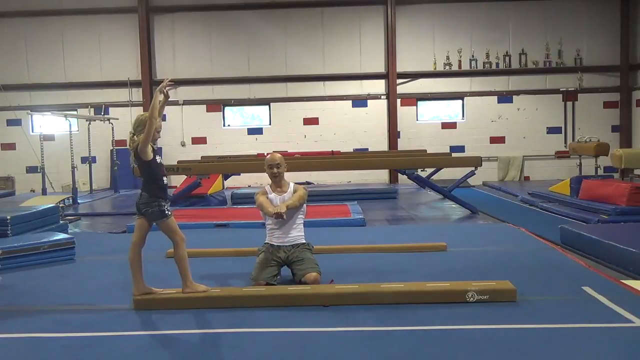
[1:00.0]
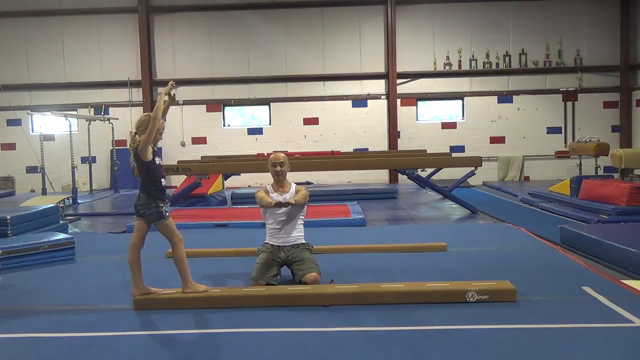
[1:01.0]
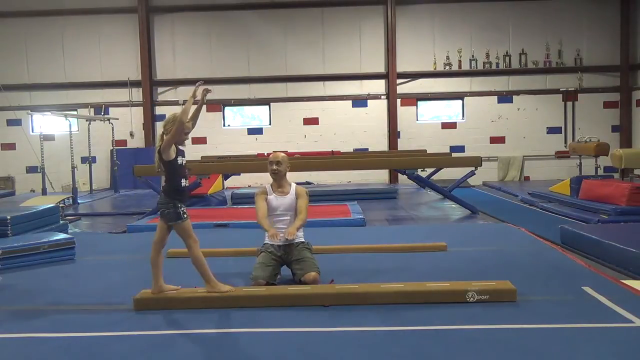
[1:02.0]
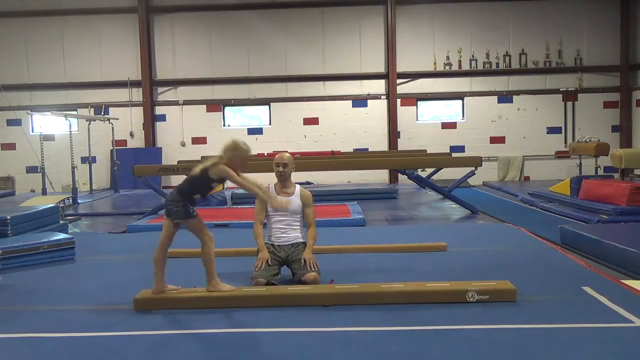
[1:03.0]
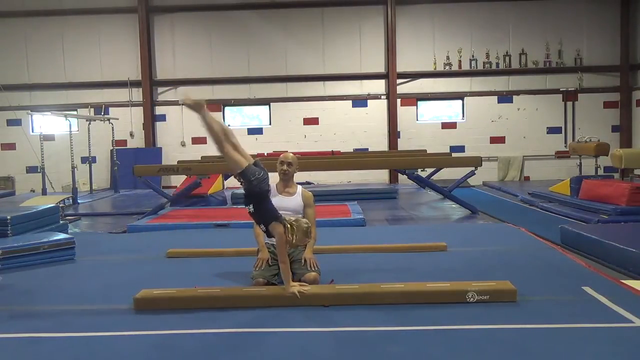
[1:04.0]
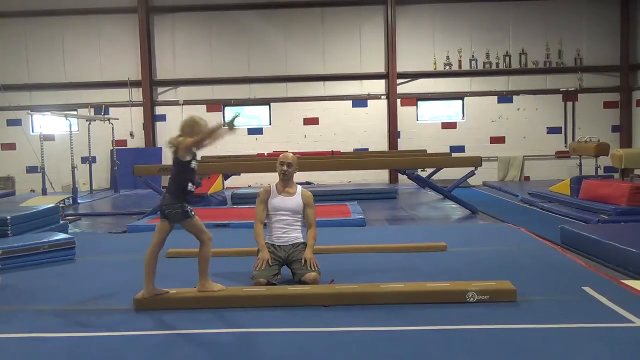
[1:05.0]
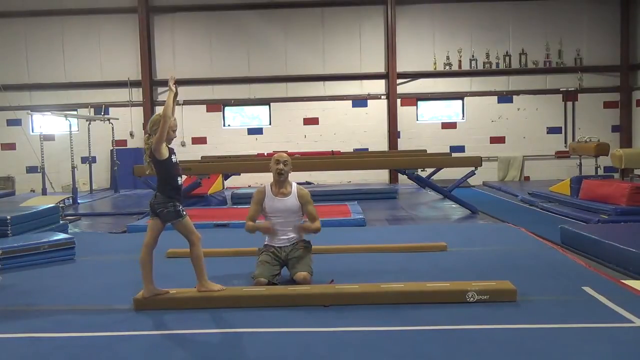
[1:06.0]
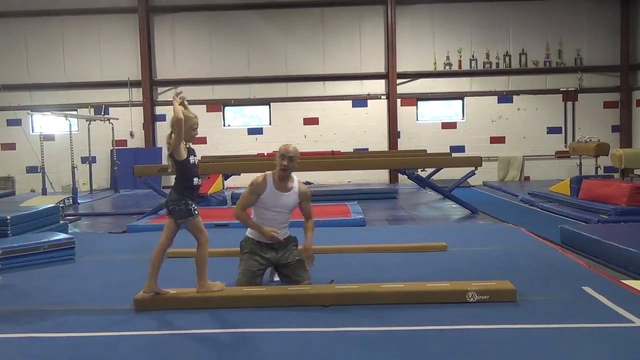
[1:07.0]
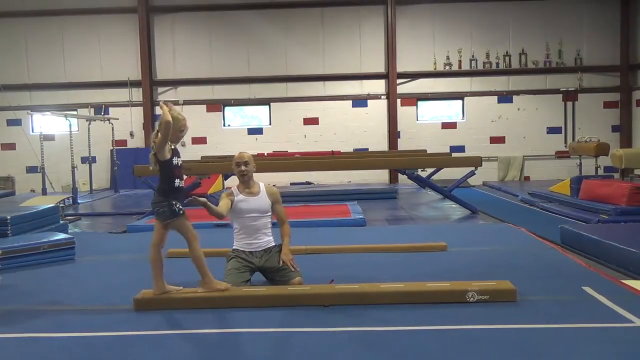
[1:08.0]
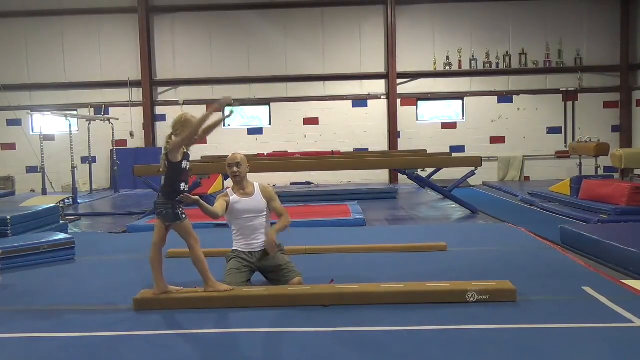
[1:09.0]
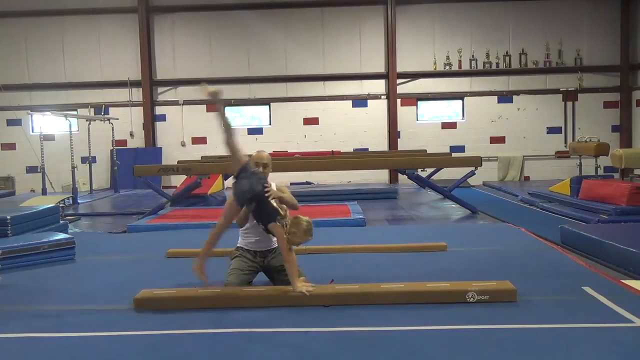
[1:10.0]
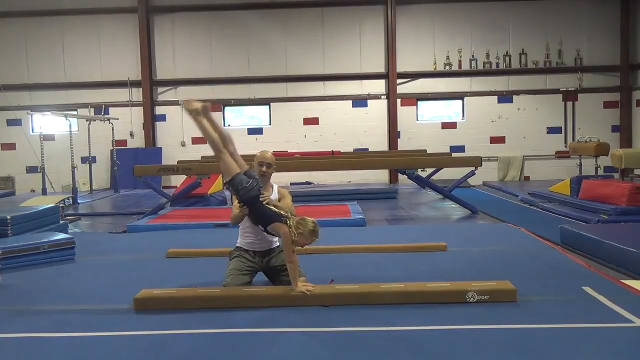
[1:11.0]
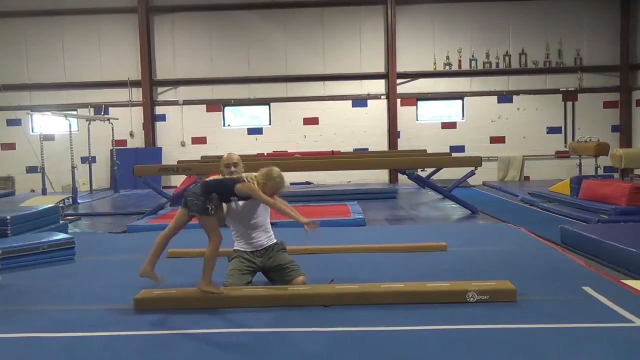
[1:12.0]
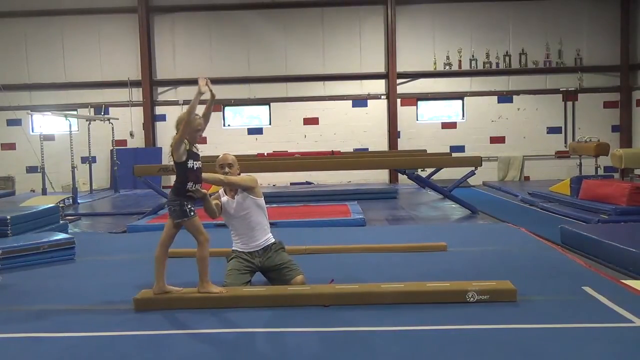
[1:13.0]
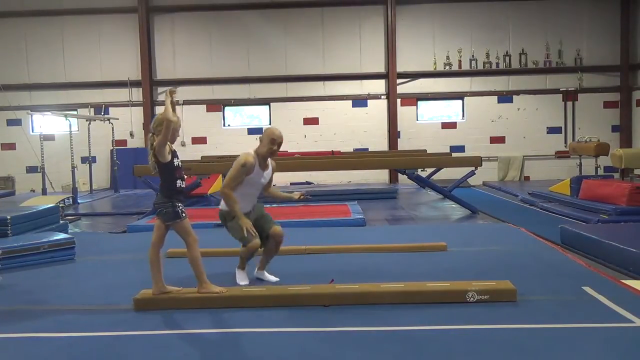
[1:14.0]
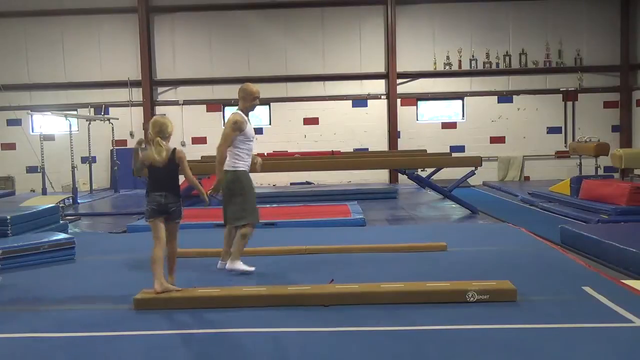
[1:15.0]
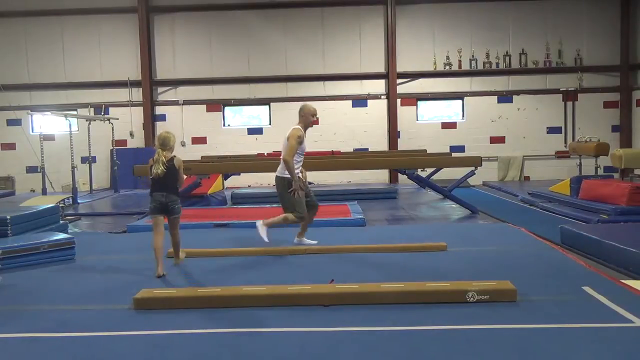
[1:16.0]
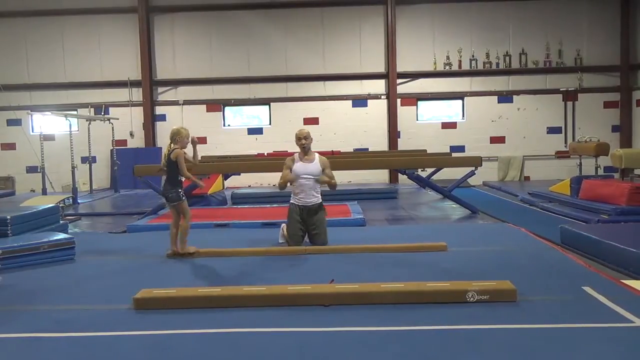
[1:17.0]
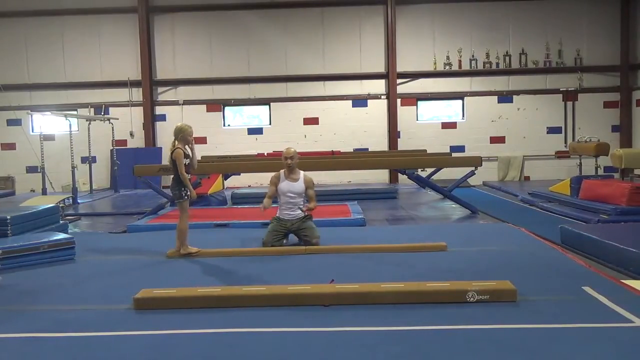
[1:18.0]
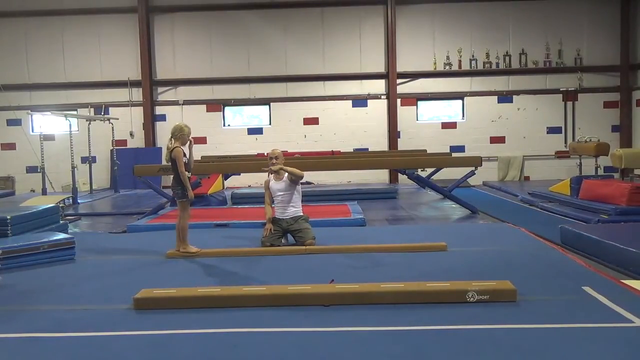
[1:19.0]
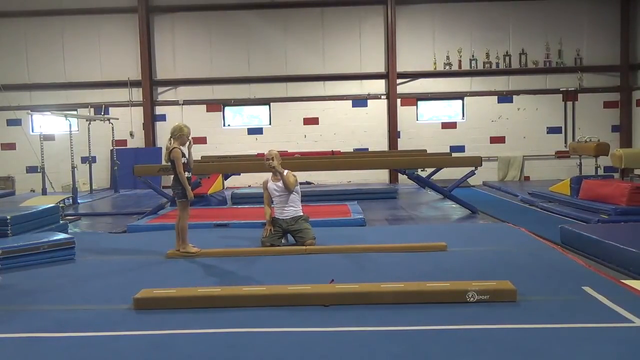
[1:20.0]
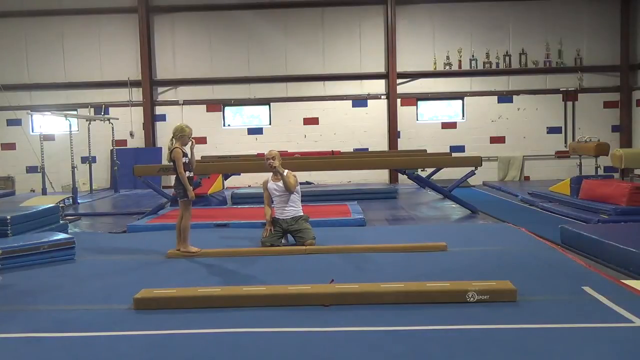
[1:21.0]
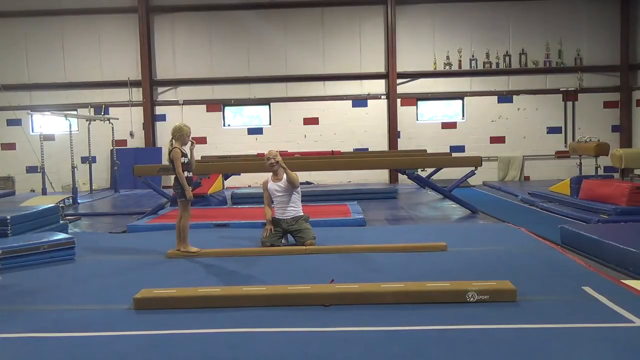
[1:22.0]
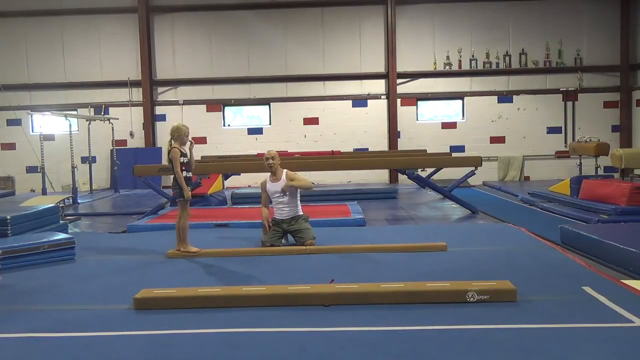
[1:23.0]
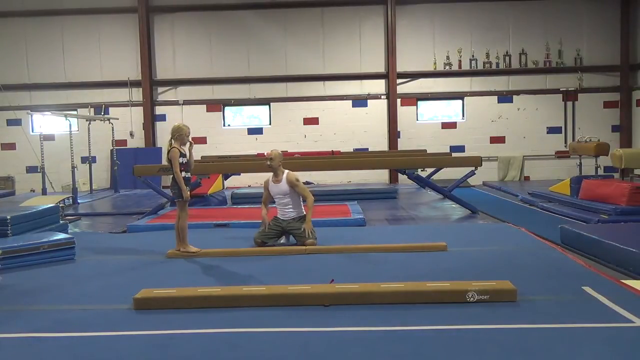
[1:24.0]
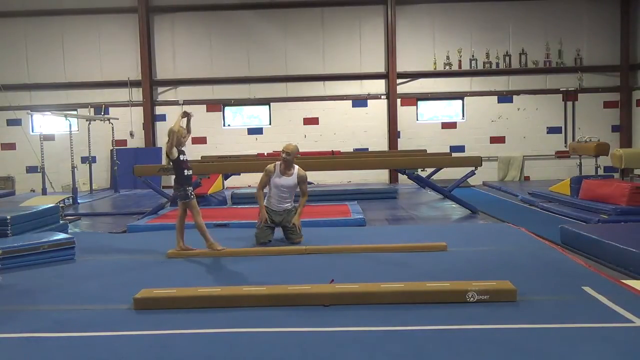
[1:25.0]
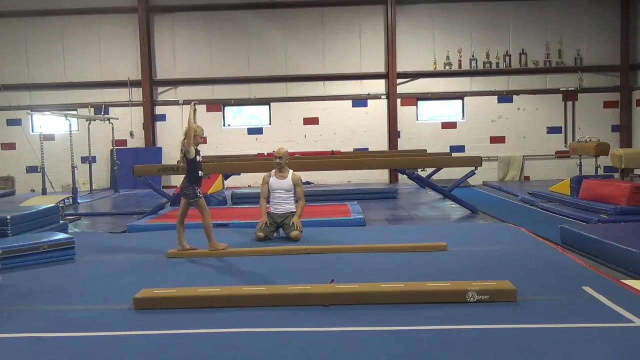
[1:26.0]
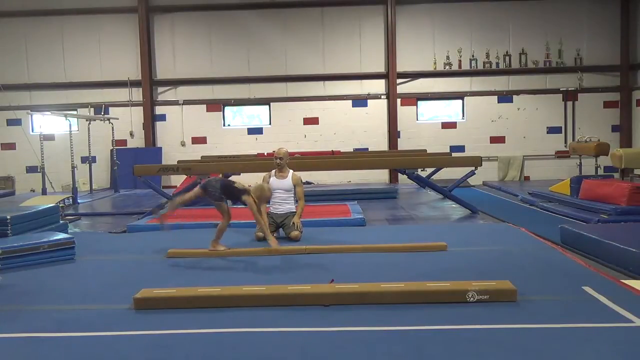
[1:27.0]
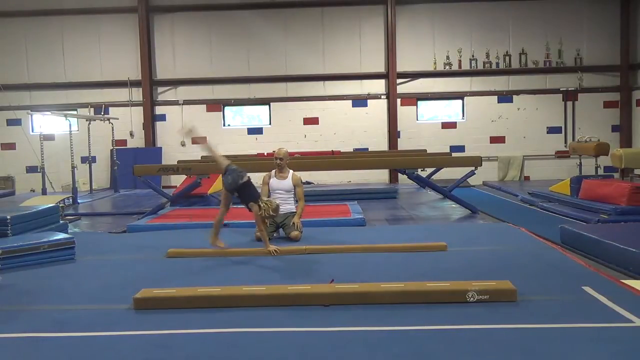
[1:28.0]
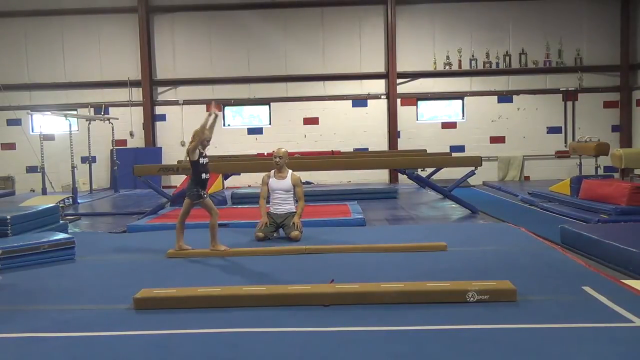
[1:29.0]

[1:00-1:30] A little girl does flips on a wooden beam, changing her angle as she goes. The coach is visible in the background, using hand movements to show her how to adjust herself during the flips.